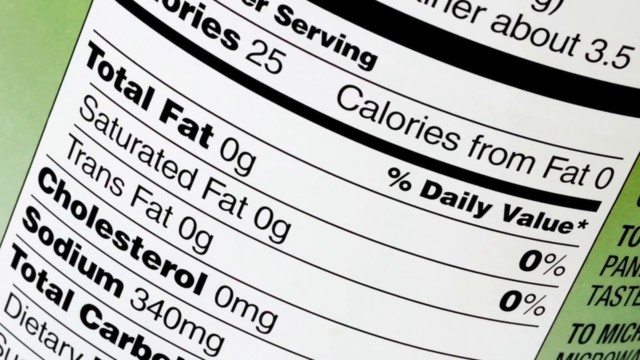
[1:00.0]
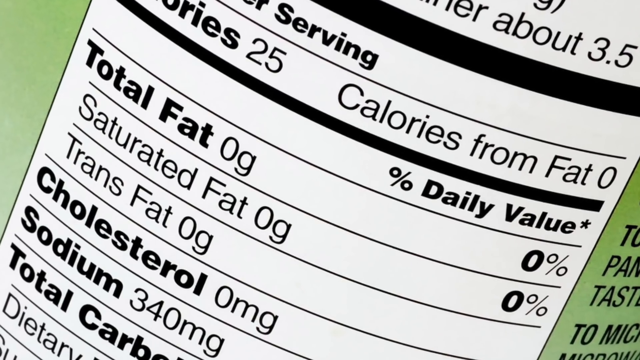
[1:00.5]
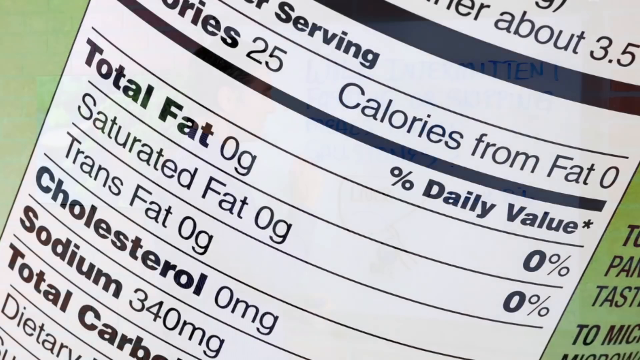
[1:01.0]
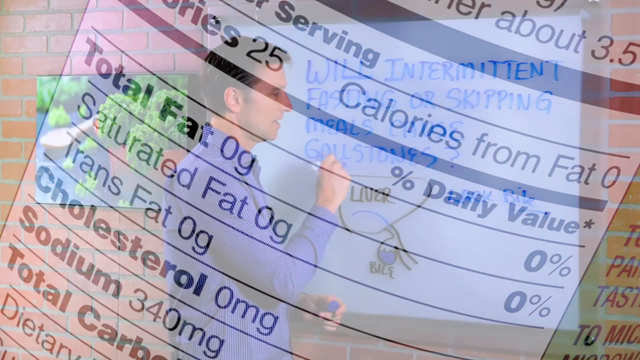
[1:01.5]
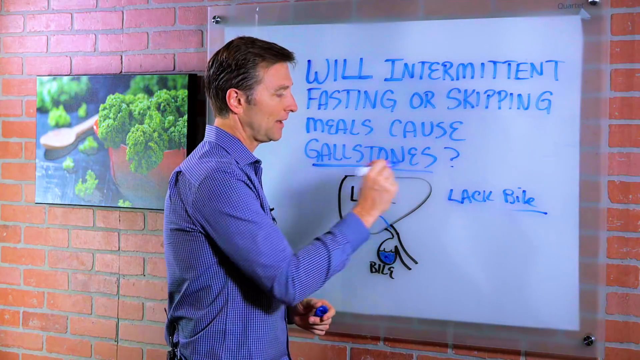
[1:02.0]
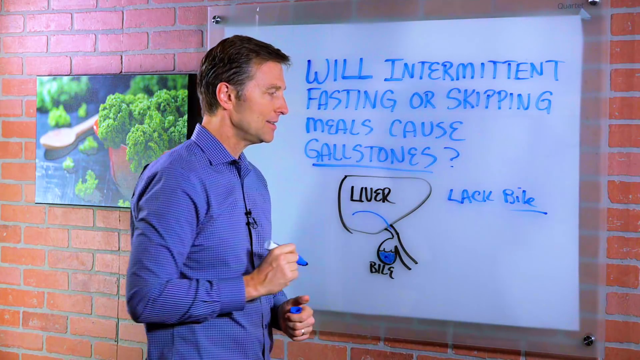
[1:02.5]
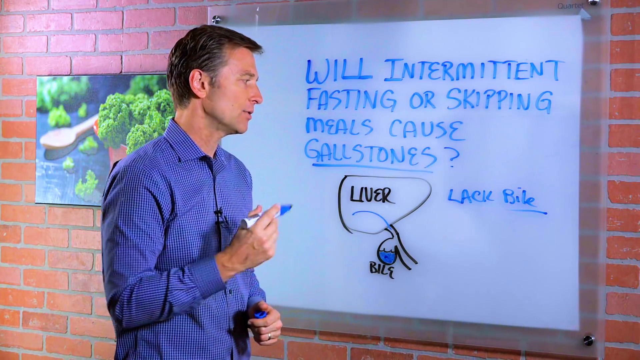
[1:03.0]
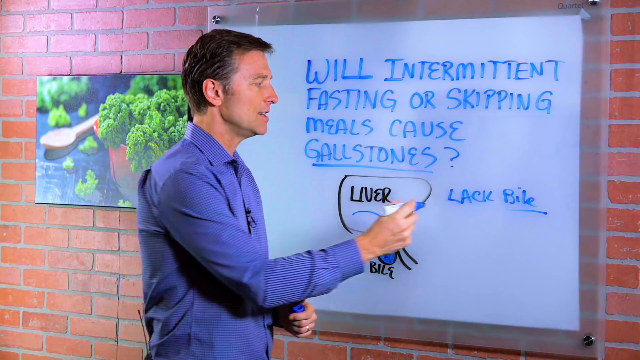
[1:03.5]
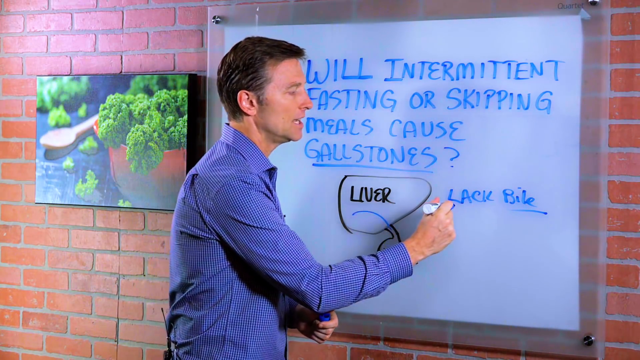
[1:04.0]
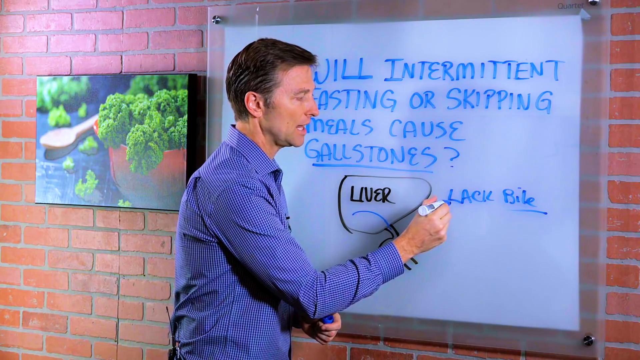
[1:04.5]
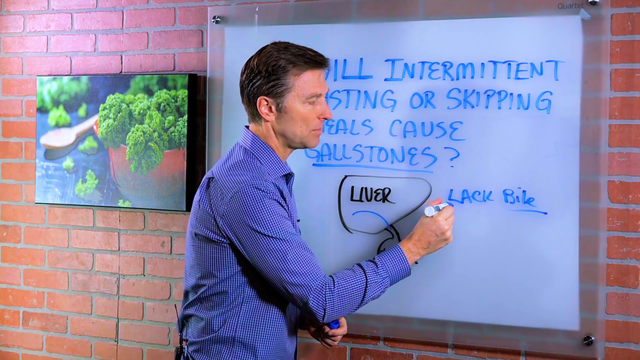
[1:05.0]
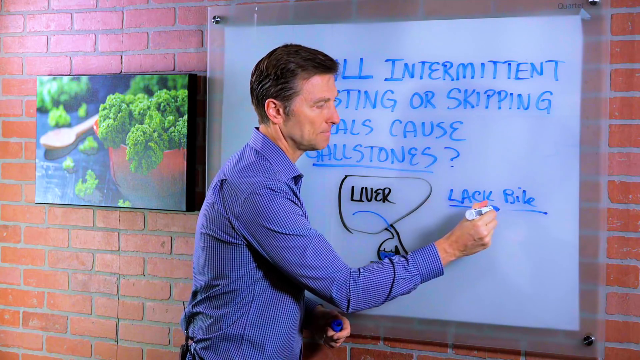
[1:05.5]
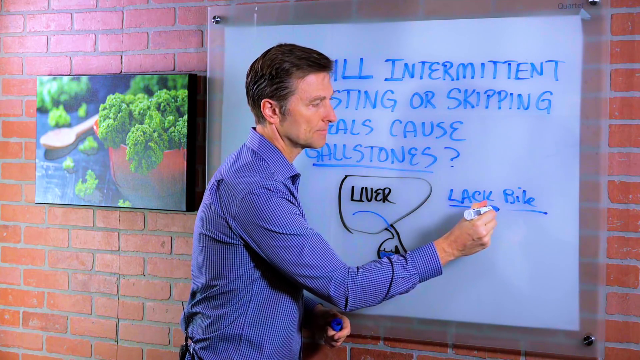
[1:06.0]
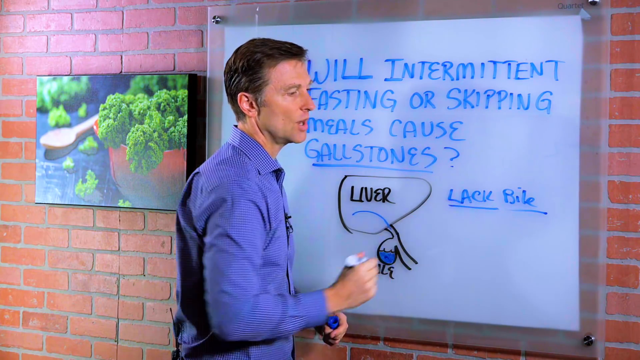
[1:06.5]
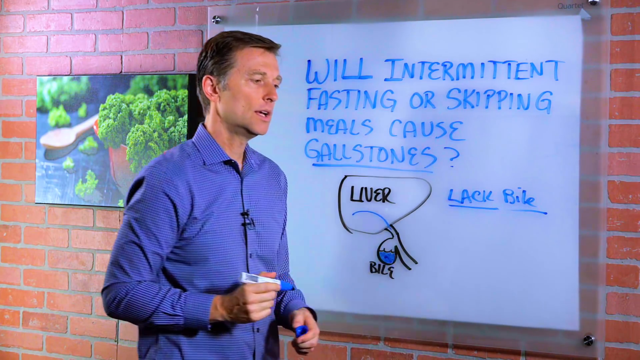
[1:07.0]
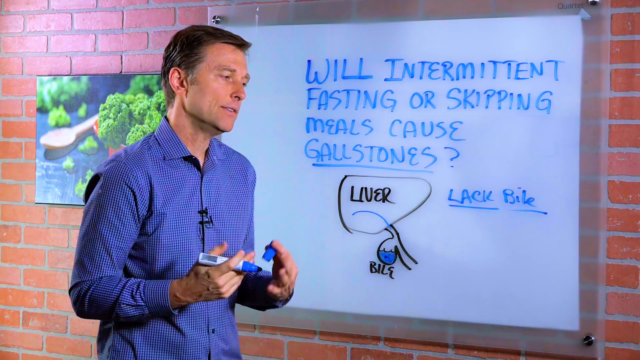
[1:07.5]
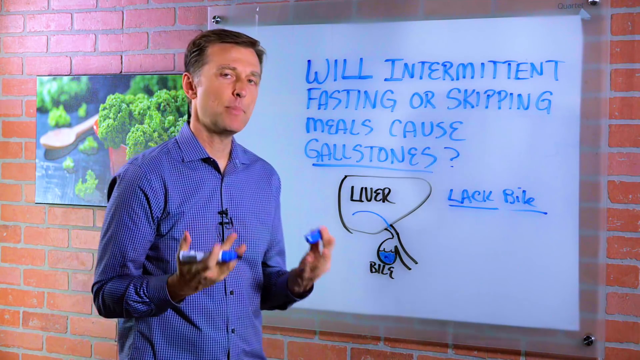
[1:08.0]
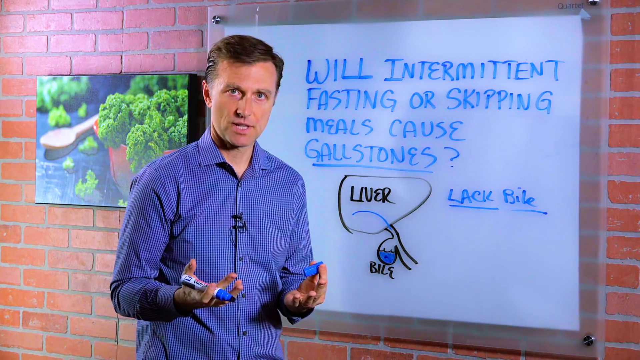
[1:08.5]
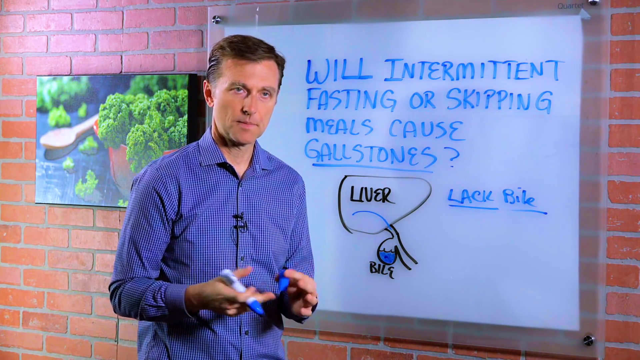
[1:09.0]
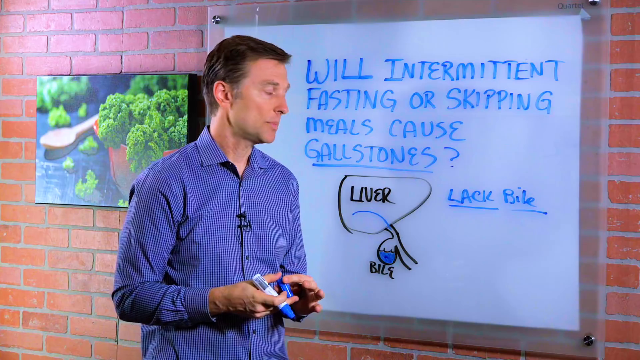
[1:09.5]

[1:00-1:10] After the nutrition label, the man is at the whiteboard again, talking and very adamant. He underlines "gallstones" and the word "lack". The video returns to the nutrition label, which shows 25 calories per serving, no total fat, saturated fat or trans fat, no cholesterol, and 340 milligrams of sodium. The man stands in front of his whiteboard underlining words and talking, and the video goes back to the nutrition label.